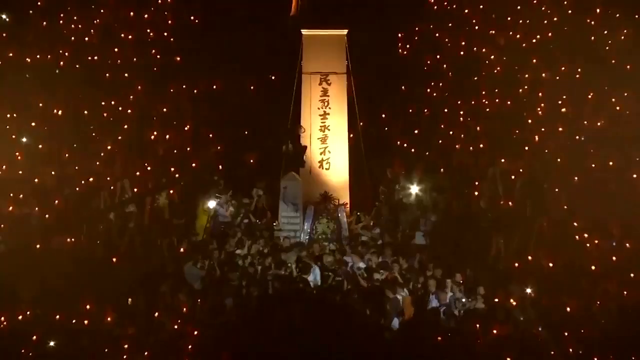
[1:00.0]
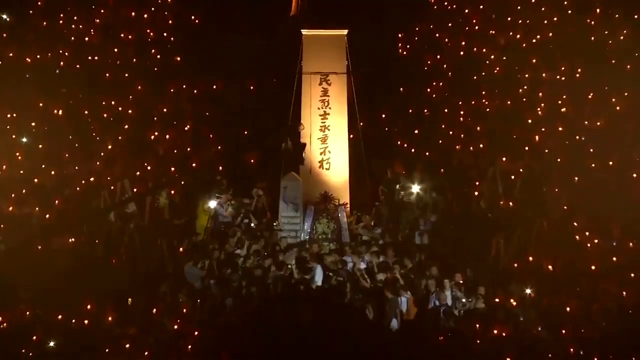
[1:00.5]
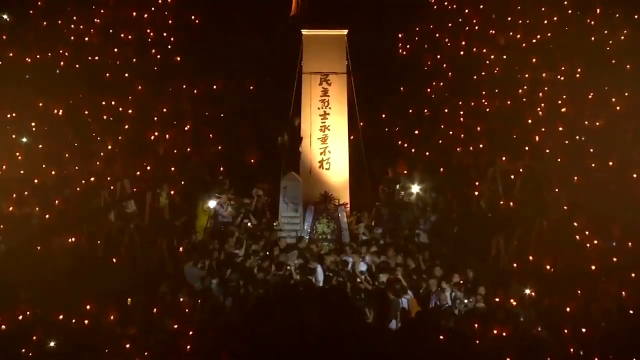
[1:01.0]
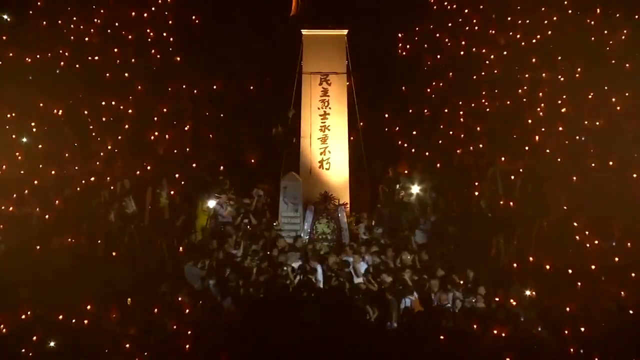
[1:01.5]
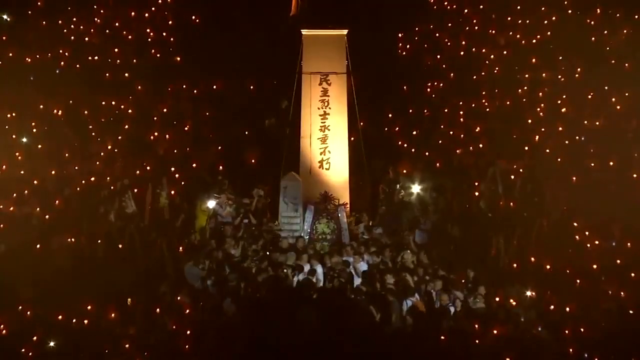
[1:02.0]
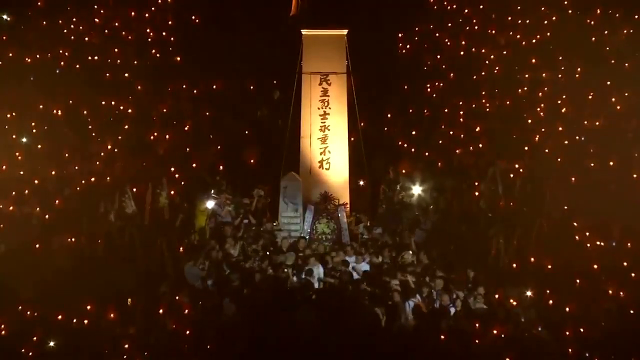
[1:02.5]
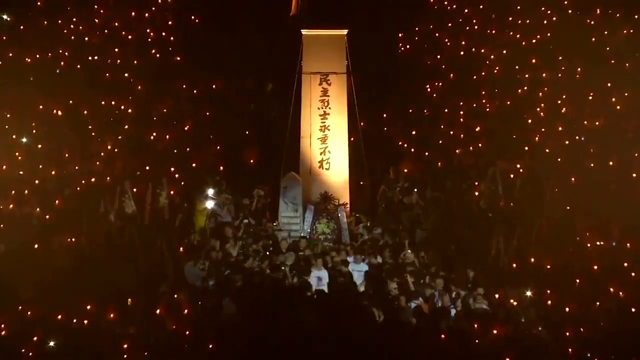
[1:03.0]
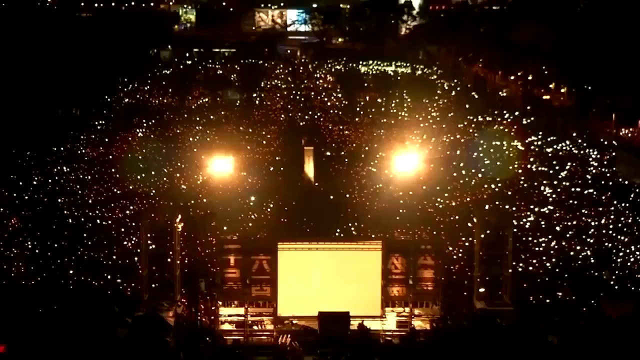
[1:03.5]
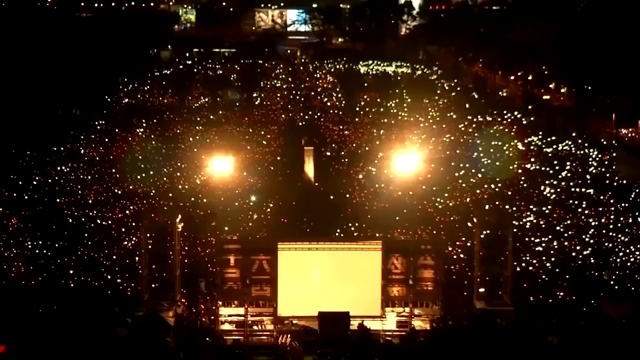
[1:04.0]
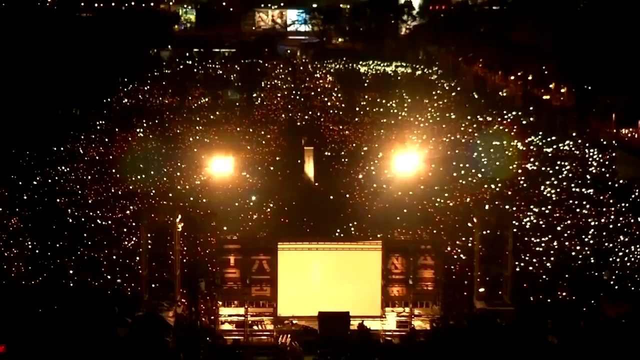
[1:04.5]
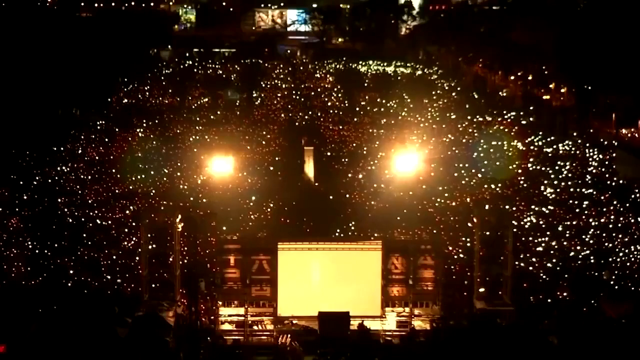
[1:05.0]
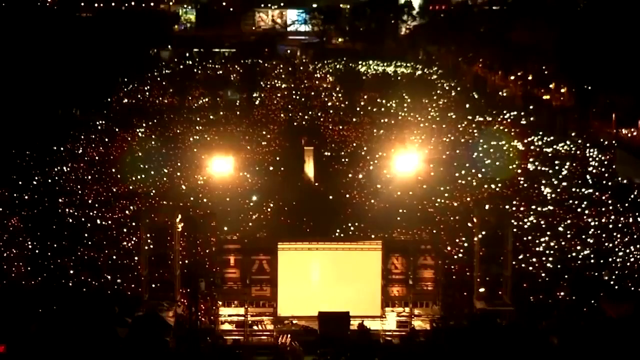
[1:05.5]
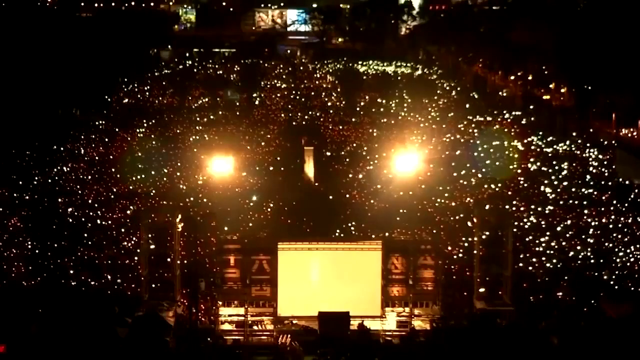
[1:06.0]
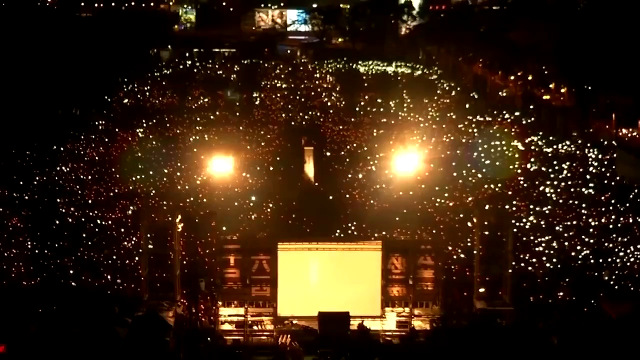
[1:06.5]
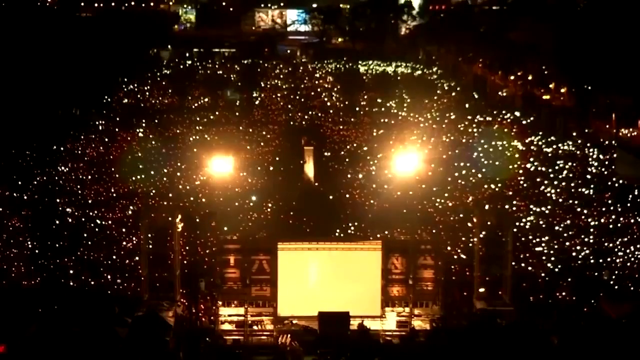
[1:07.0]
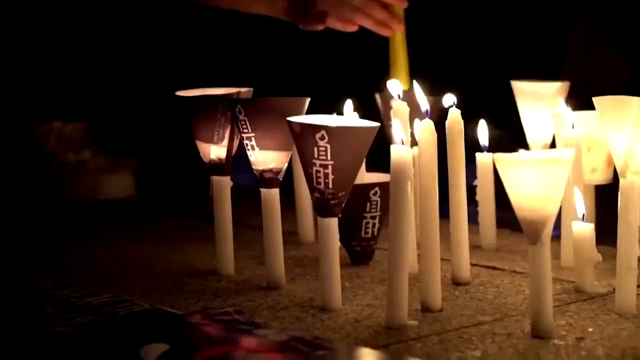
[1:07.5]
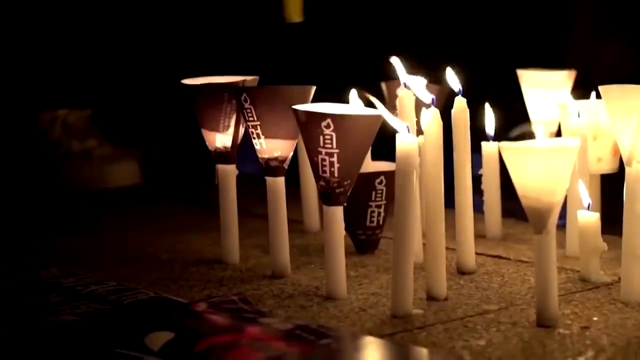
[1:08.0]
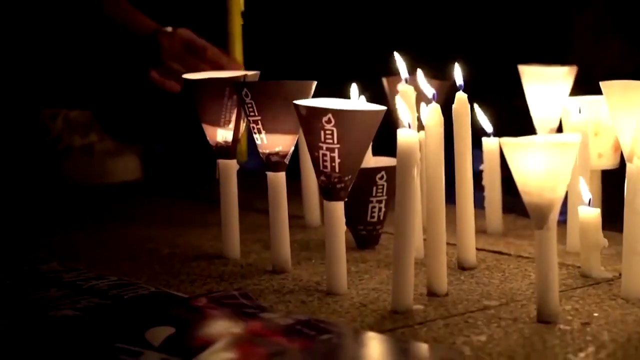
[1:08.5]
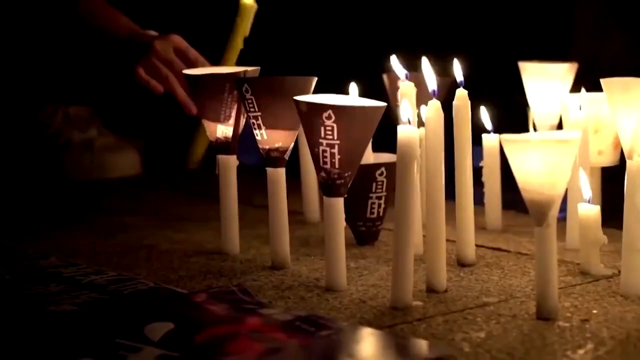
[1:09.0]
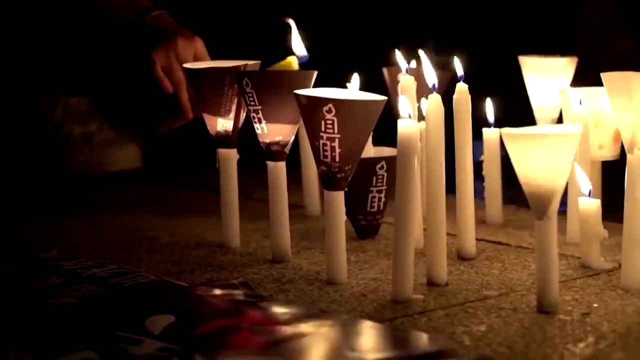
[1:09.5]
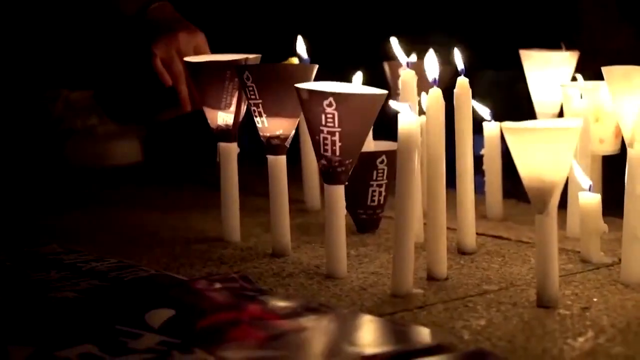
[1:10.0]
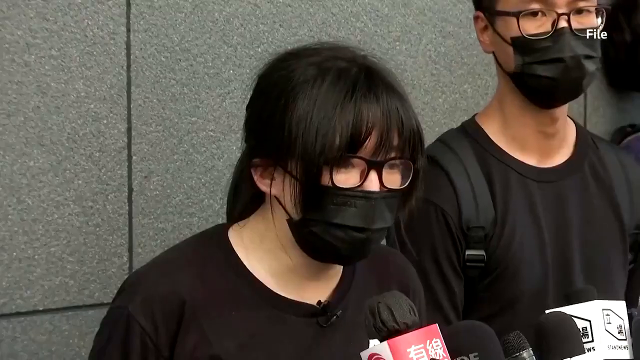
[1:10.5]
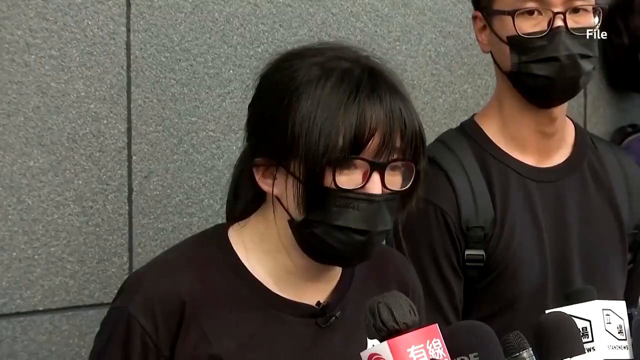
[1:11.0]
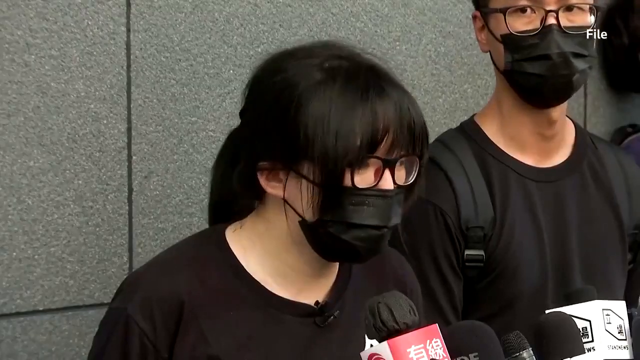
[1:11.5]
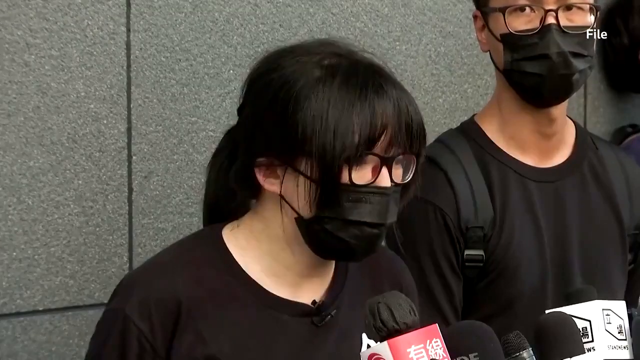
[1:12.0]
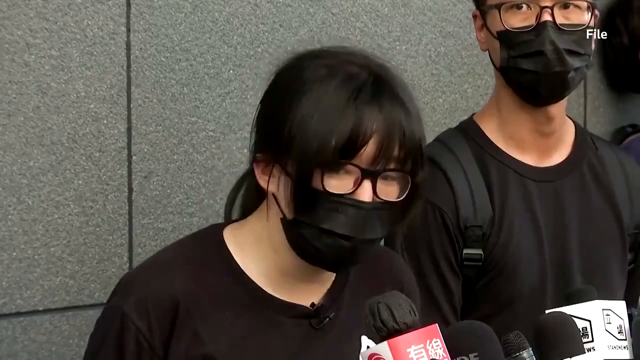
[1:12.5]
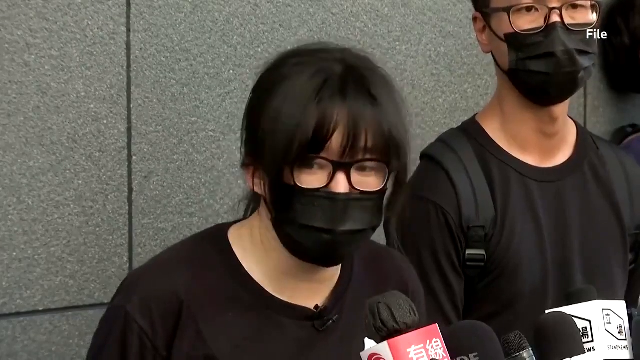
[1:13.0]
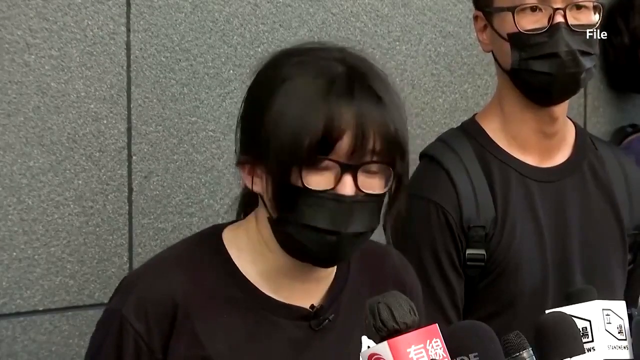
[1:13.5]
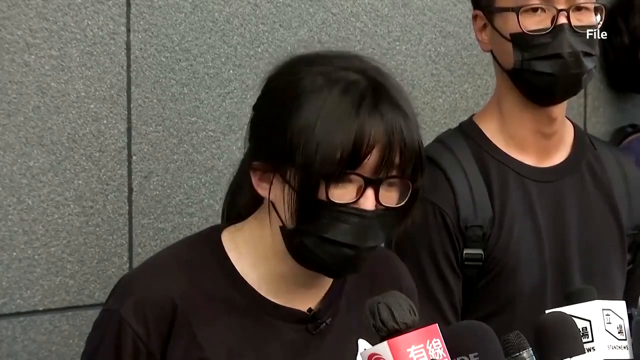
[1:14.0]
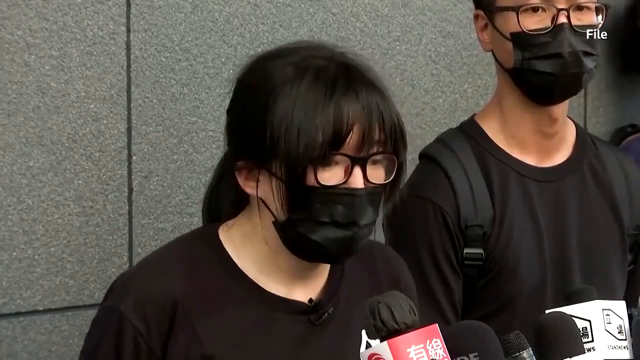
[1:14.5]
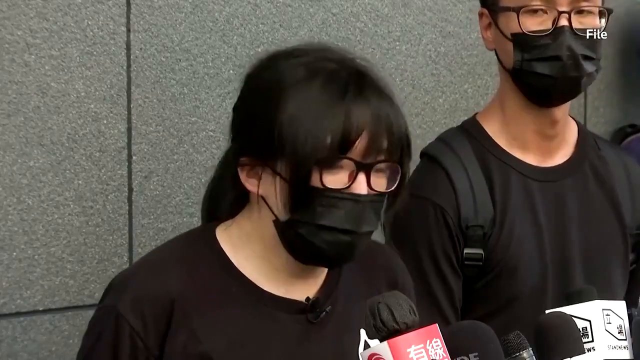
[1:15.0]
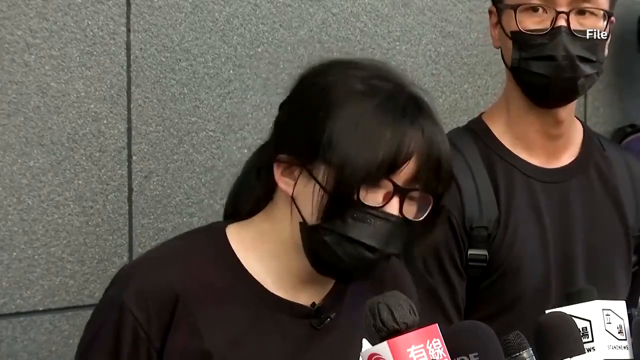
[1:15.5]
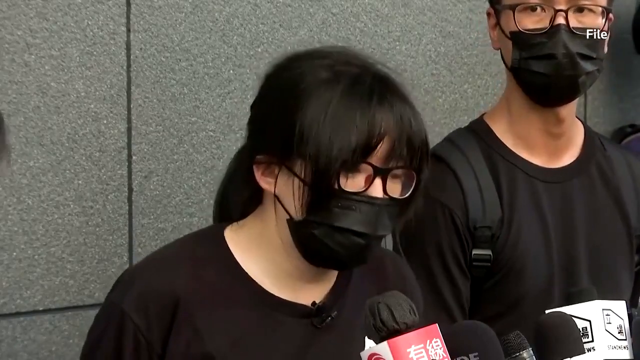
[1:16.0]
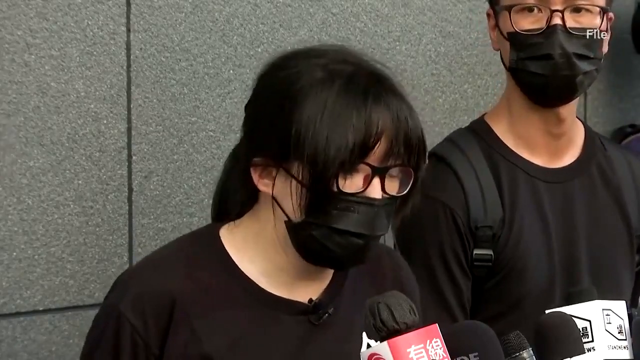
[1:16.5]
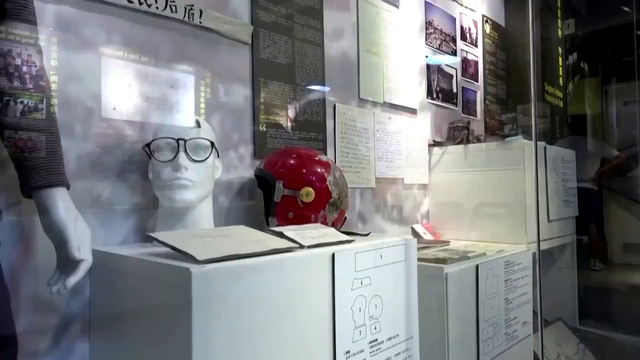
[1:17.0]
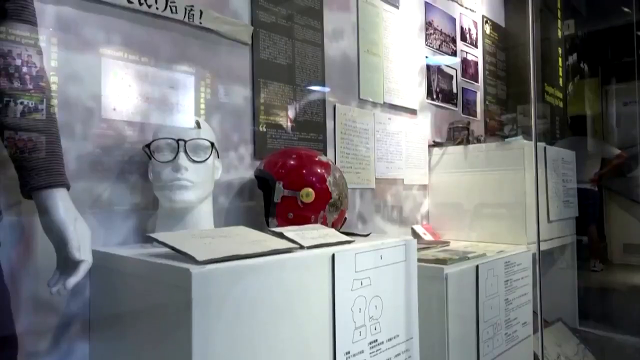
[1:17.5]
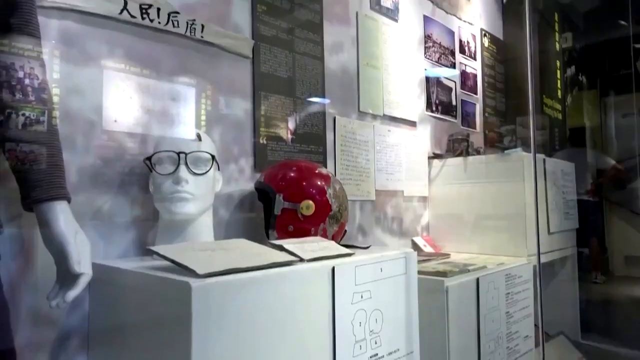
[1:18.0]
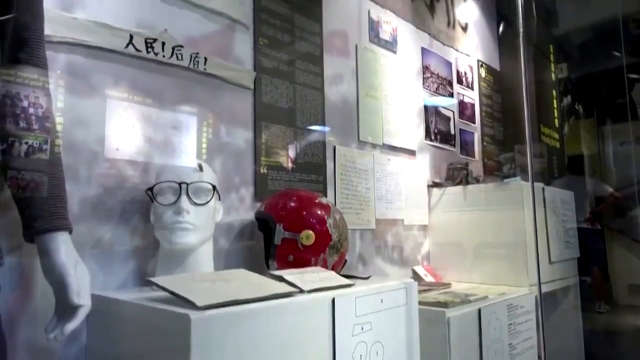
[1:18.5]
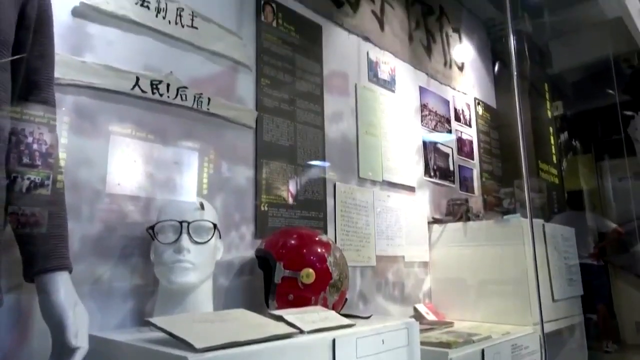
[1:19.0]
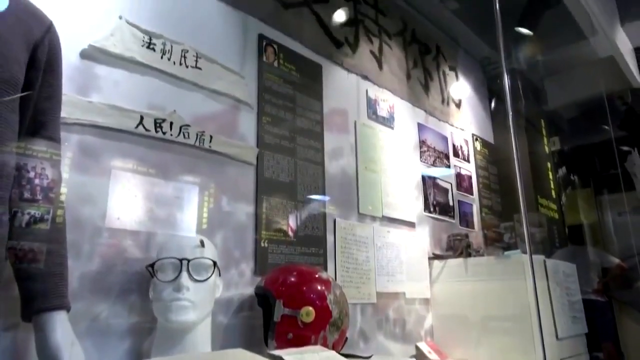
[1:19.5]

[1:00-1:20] A wide shot shows the crowd from above with many lights flickering, thousands of them, perhaps candles or phone lights. Next comes an image of 13 or 14 candles of varying heights, some burnt down to the bottom. A woman in a black face mask is then interviewed by the media; she wears black glasses, her hair covers much of her forehead and the side of her head, she has a ponytail at the back, and she wears a black shirt. Next, items are displayed behind a glass panel: a red helmet in the centre appears to have been slightly burned, and to its left is a pair of glasses on a mannequin head.